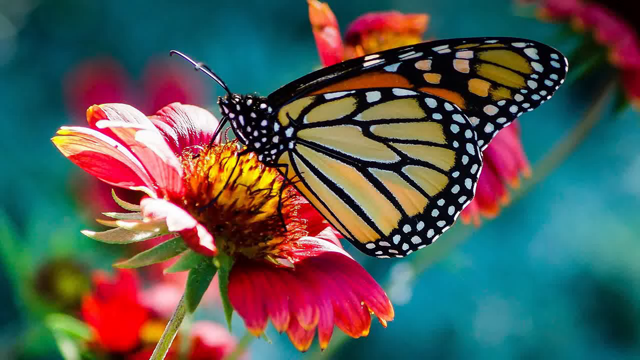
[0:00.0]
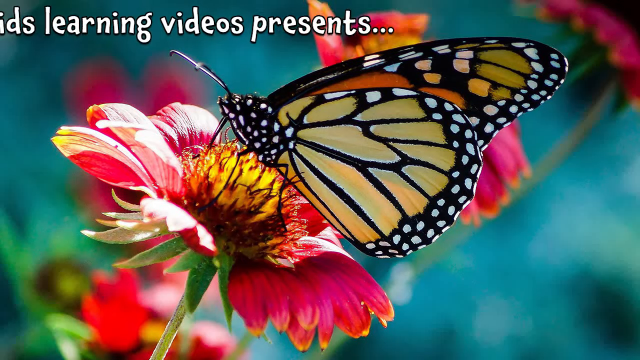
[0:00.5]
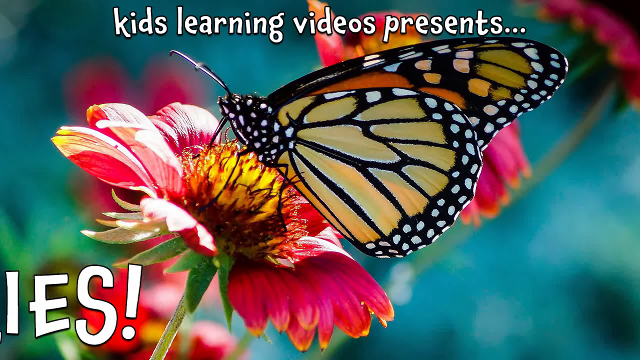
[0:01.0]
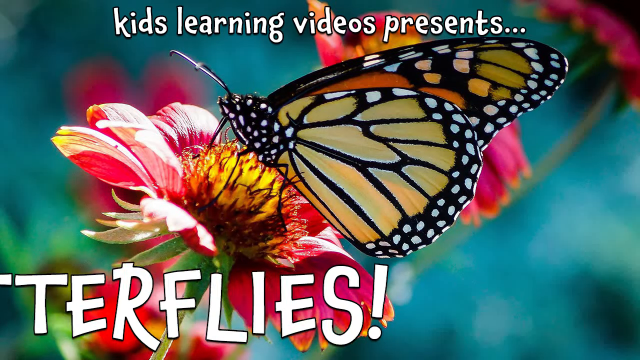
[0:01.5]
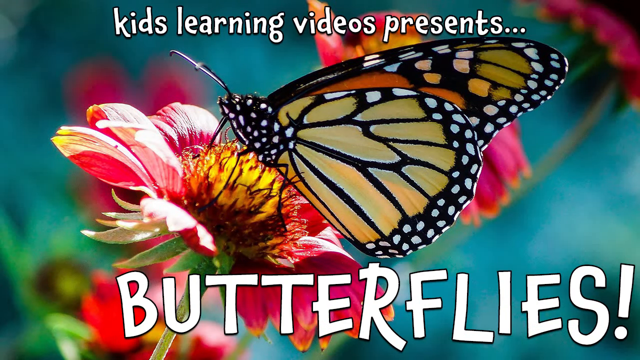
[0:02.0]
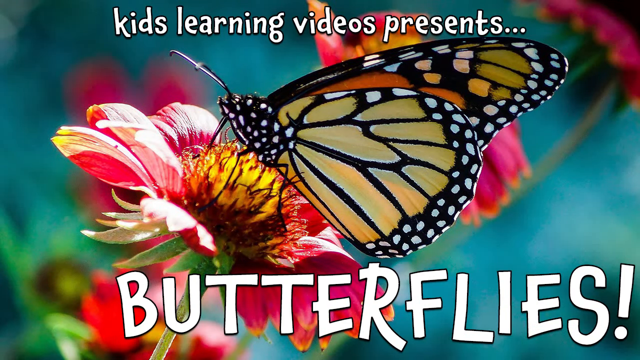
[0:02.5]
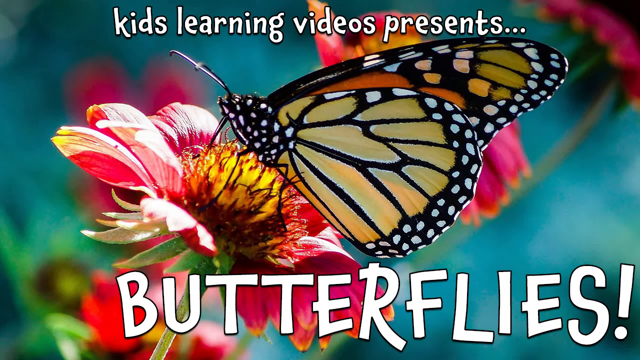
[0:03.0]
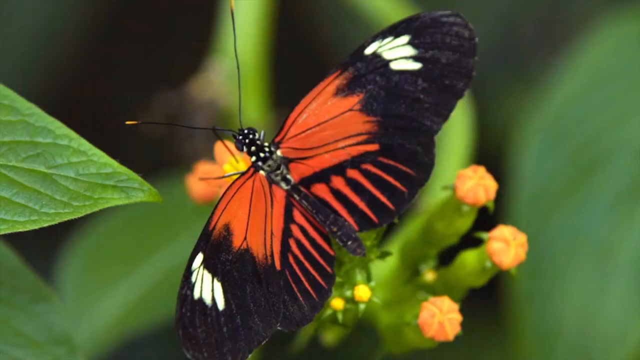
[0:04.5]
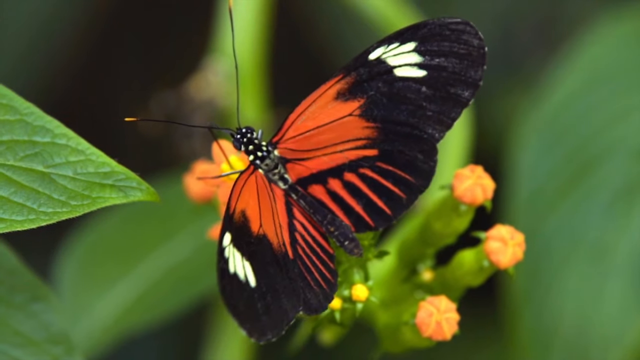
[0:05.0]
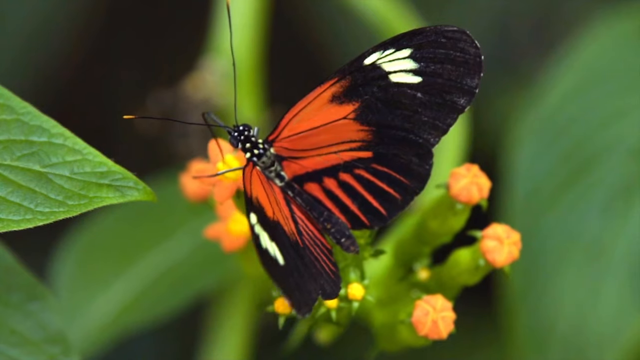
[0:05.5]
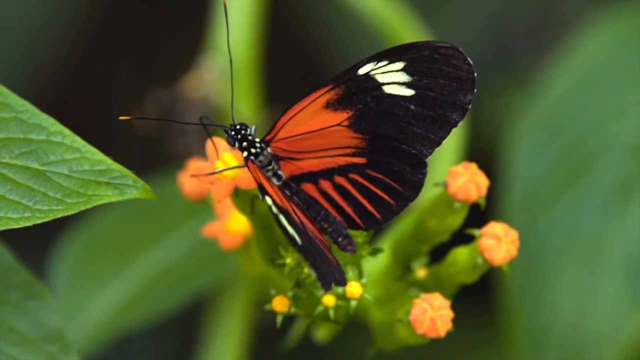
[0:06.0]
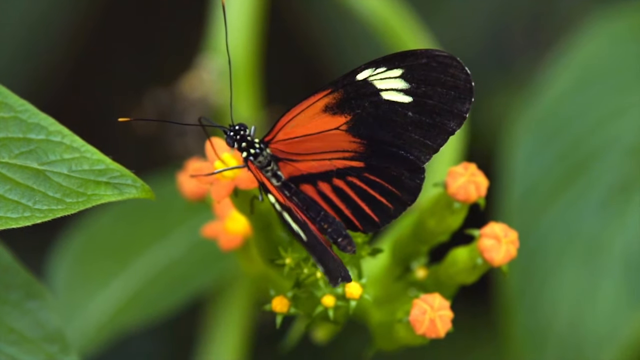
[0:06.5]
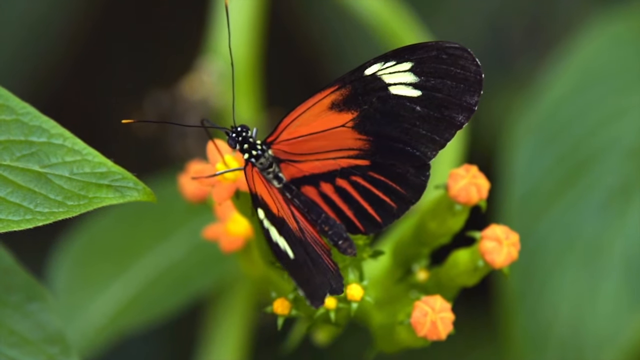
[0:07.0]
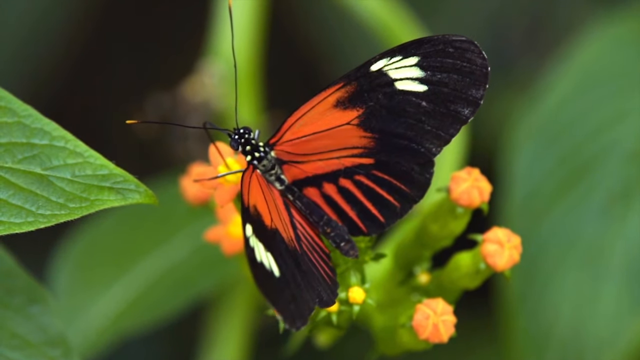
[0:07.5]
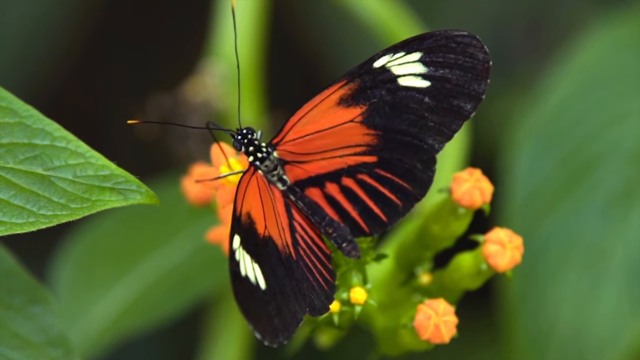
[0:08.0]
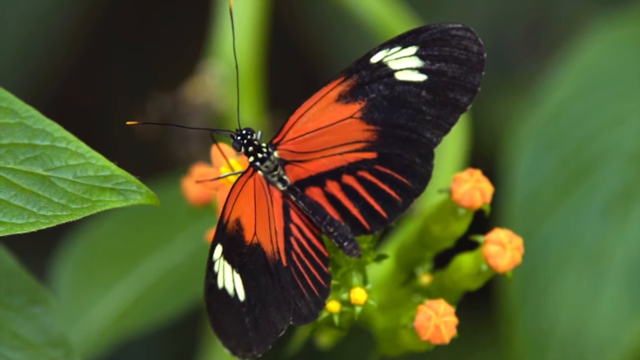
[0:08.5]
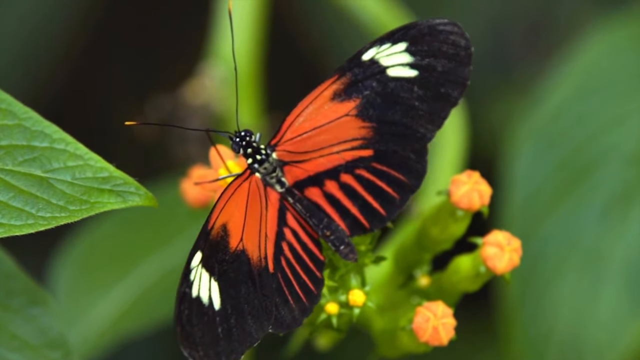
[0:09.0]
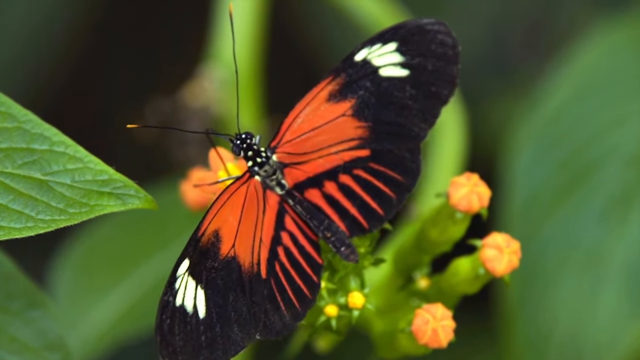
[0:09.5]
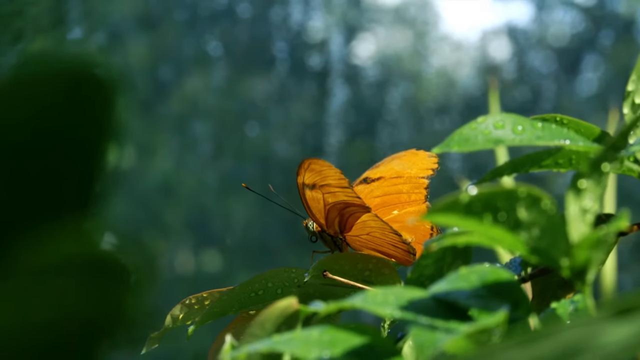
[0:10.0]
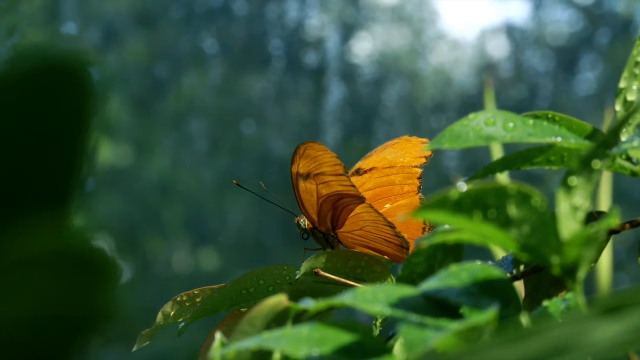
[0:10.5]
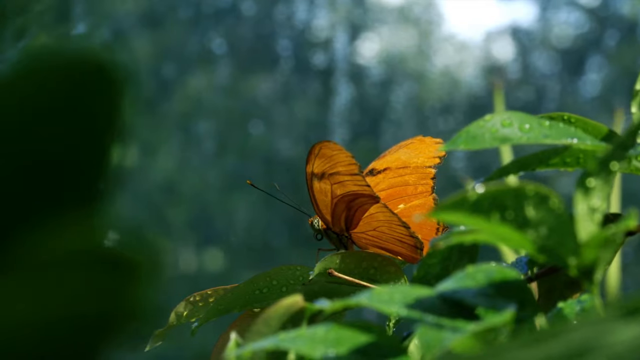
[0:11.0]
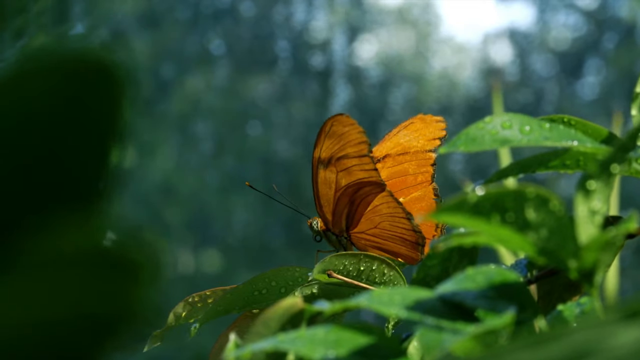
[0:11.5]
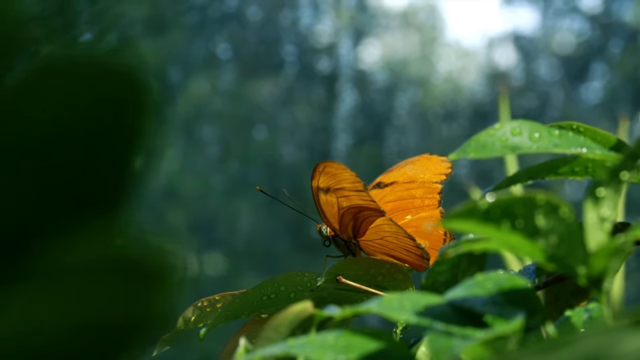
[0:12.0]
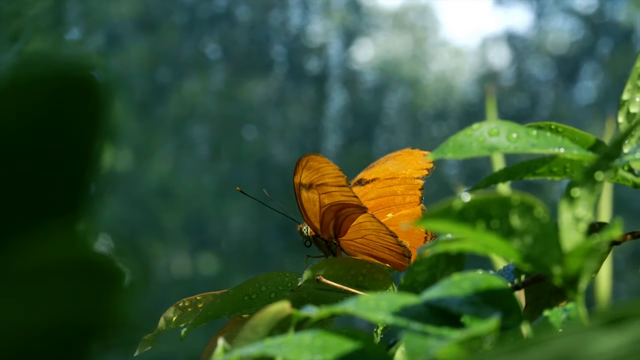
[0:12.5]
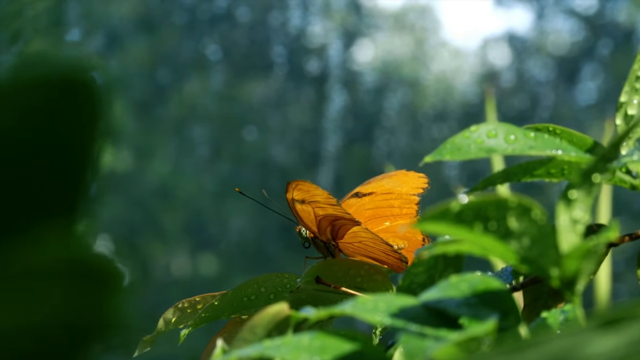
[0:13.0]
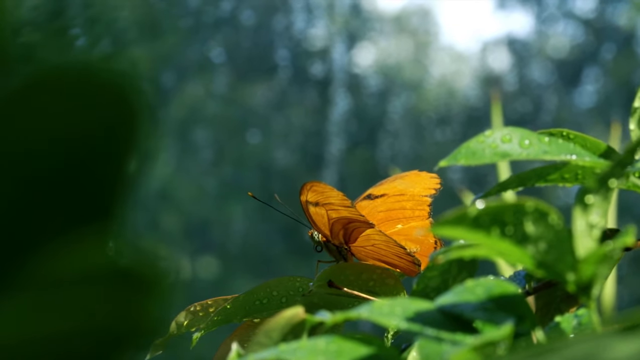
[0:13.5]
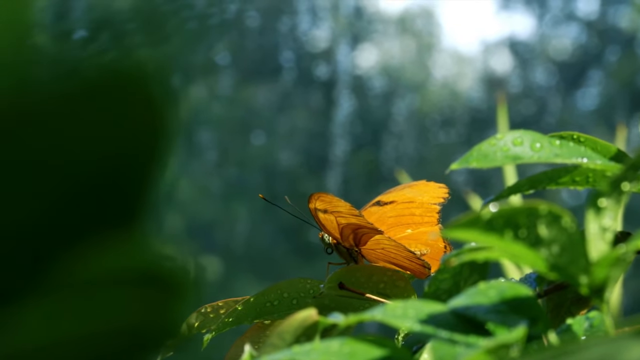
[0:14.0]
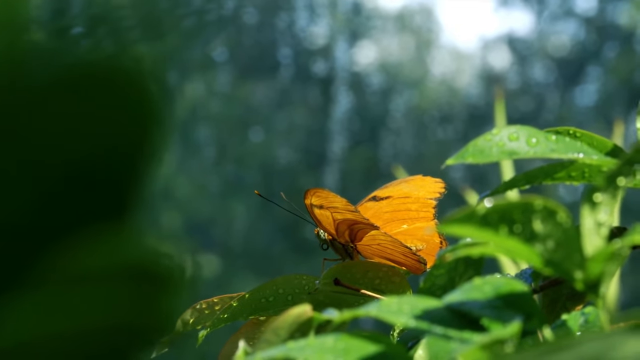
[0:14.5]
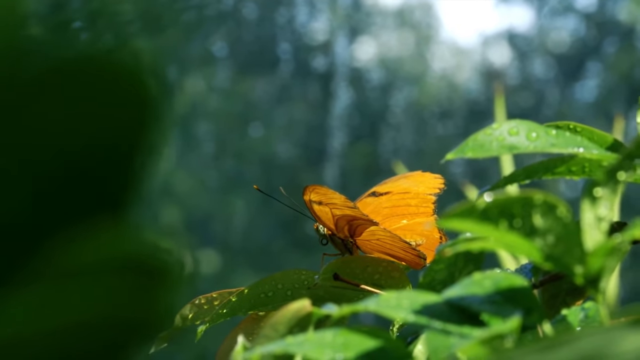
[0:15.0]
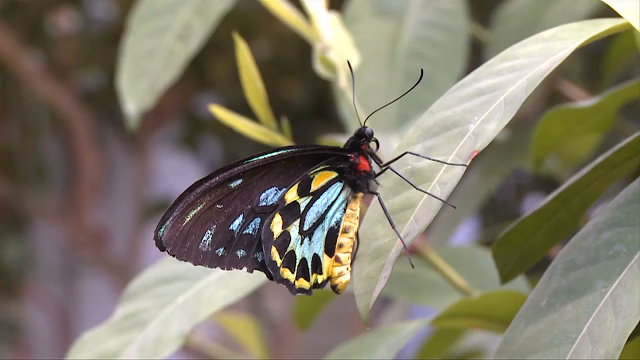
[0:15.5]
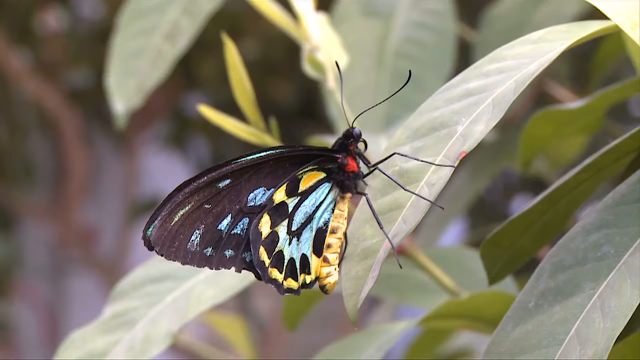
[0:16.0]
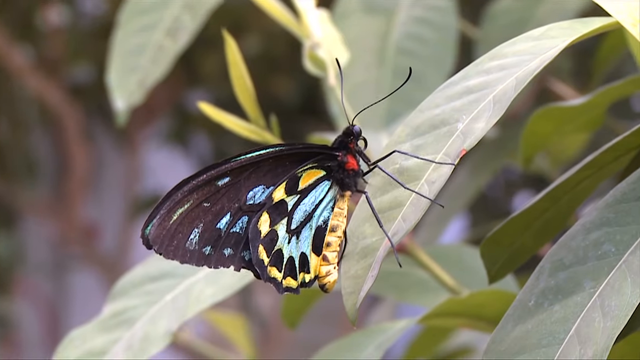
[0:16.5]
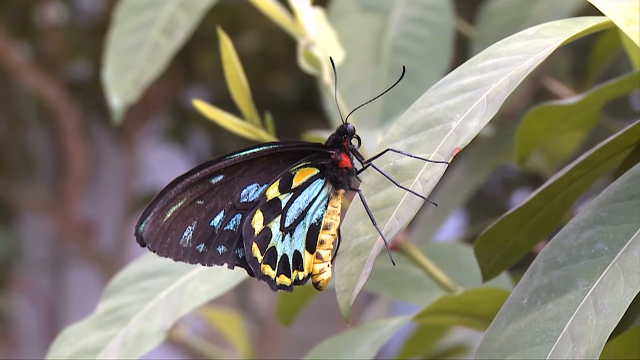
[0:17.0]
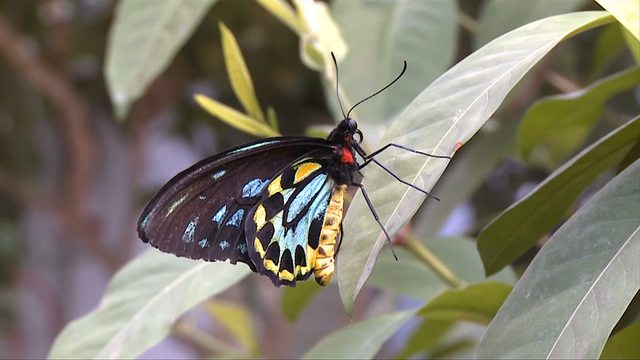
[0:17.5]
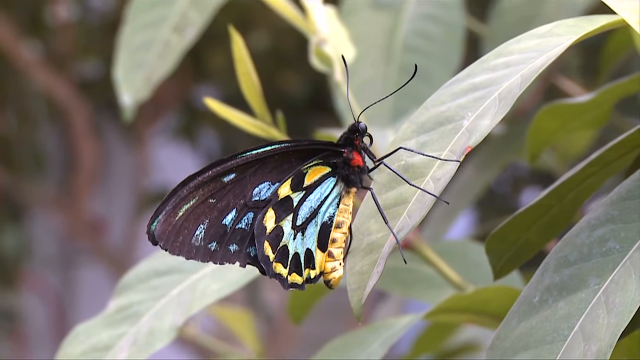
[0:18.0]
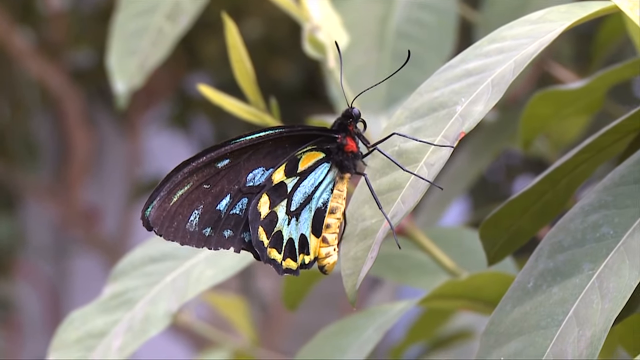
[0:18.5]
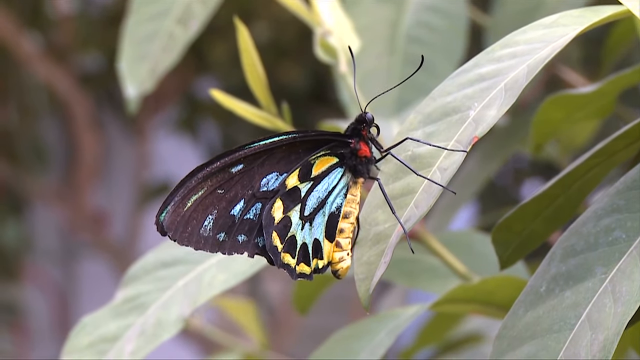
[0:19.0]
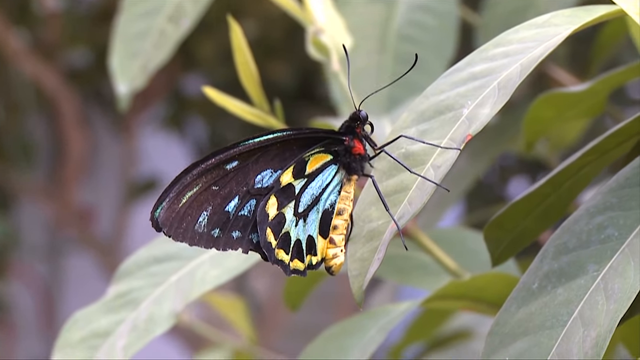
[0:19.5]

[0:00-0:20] White lettering across the top reads "Butterflies, fun butterfly facts for kids," and below it reads "Videos presents..." In the top left corner is a yellow circle with a green circle inside it, and in the center of that is an orange, black and white striped tiger. In the center of the frame is a black butterfly with white circular dots on the edges of its wings, black and white circular dots on its body, a bit of orange and powder green on the top wing, and a bottom wing of a sort of beige color. The background is blue. The butterfly stands on a flower with a green stem, red petals, and a yellow center with dark brown spikes on top. Lettering appears below it reading "Butterflies." Next, an orange and black butterfly with little white dots, a thin body and black antennae sits on green leaves, with some orange circles on some of the stems, moving its wings up and down. A yellow butterfly then sits on some wet green leaves with green trees in the background. Finally, a black butterfly with yellow dots, black legs and black antennae sits on gray and green leaves.